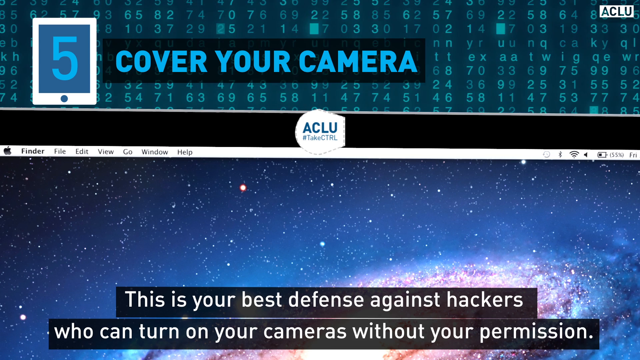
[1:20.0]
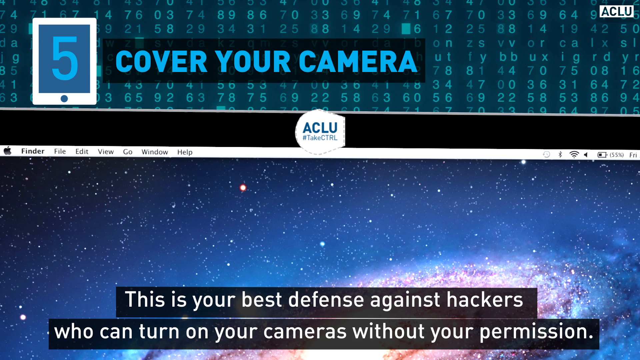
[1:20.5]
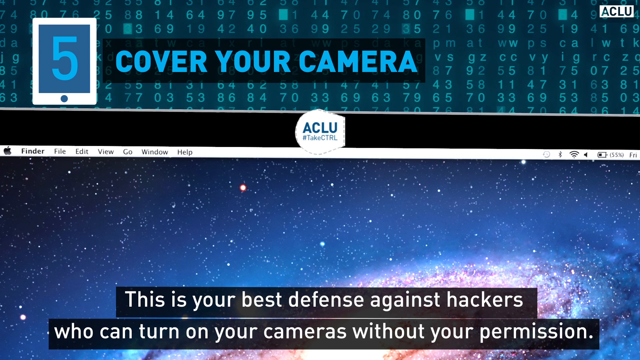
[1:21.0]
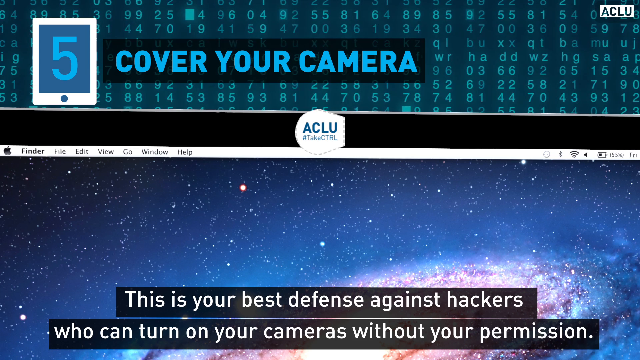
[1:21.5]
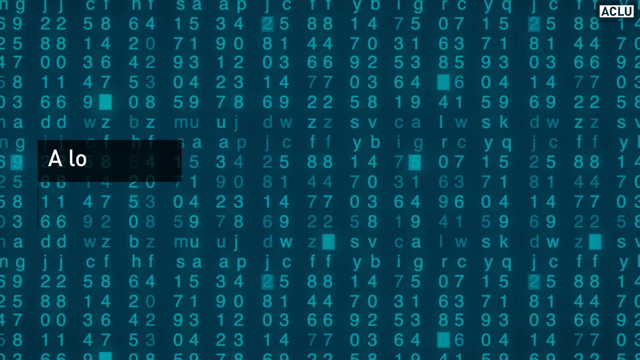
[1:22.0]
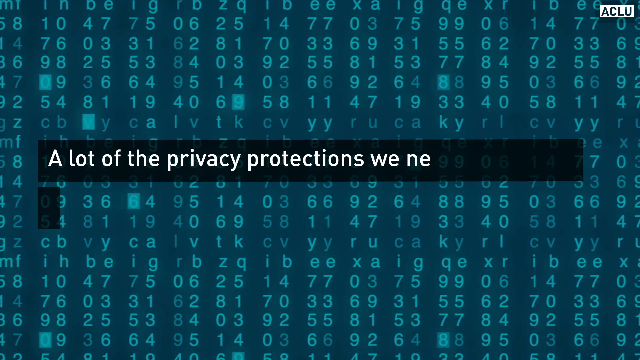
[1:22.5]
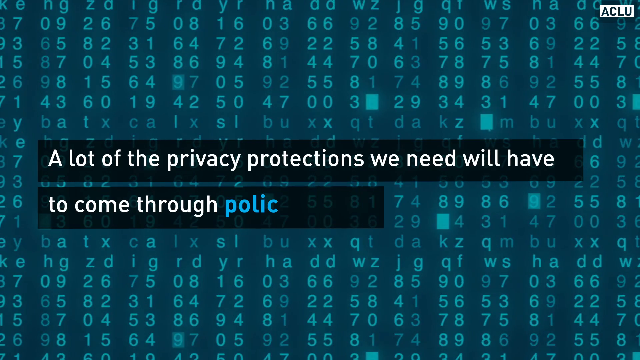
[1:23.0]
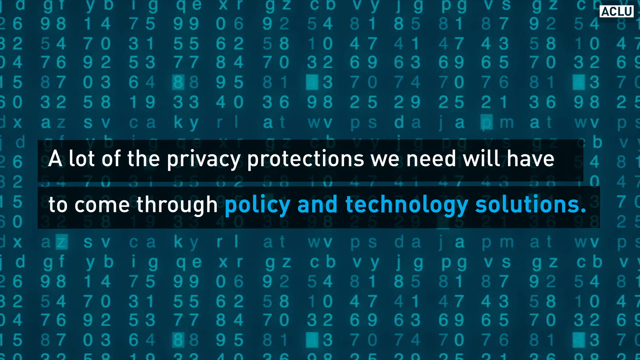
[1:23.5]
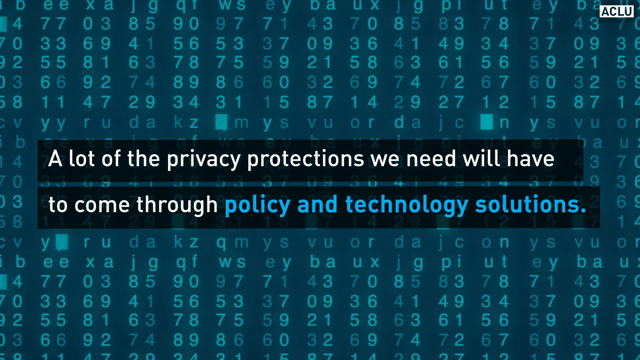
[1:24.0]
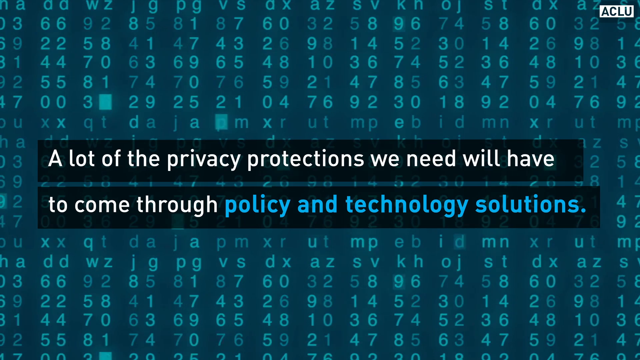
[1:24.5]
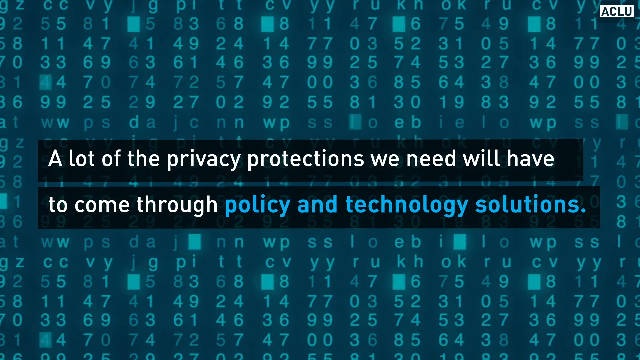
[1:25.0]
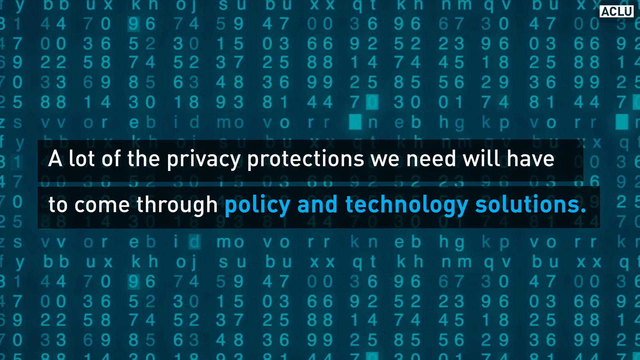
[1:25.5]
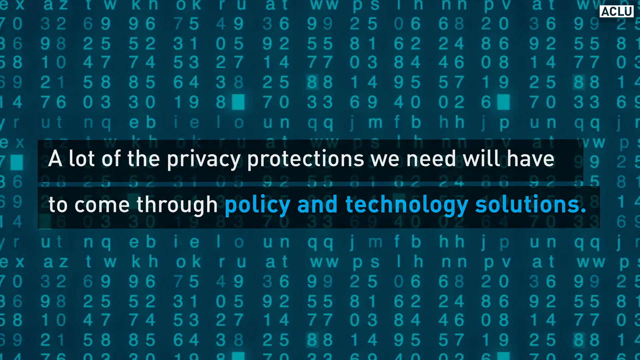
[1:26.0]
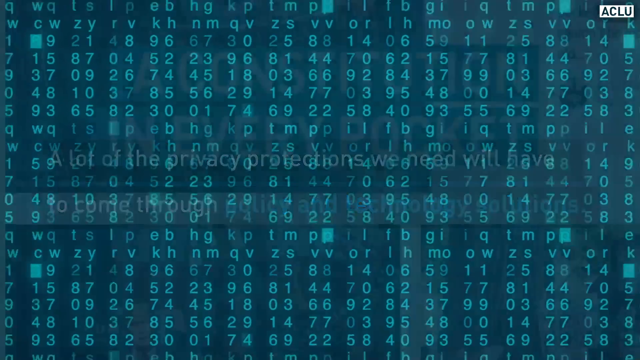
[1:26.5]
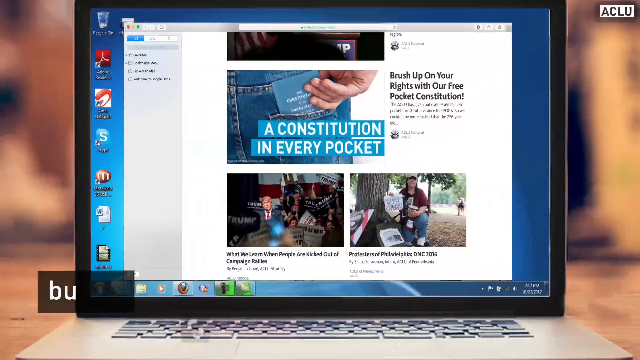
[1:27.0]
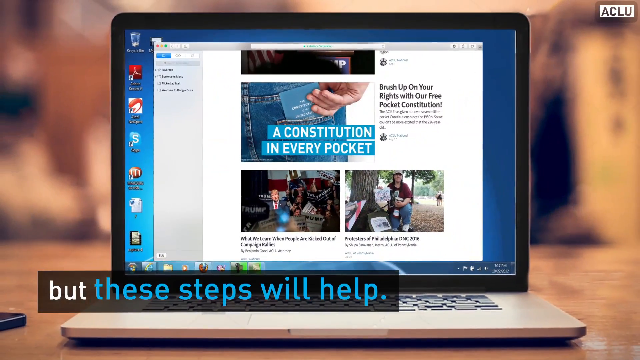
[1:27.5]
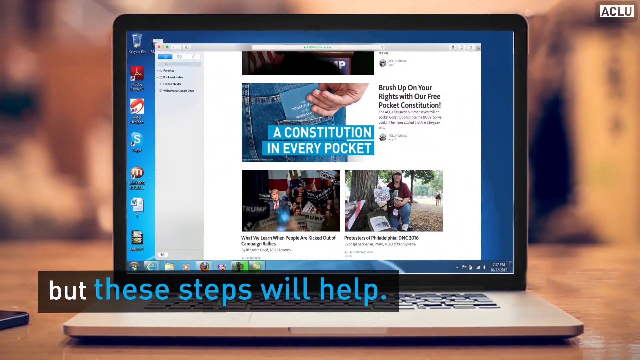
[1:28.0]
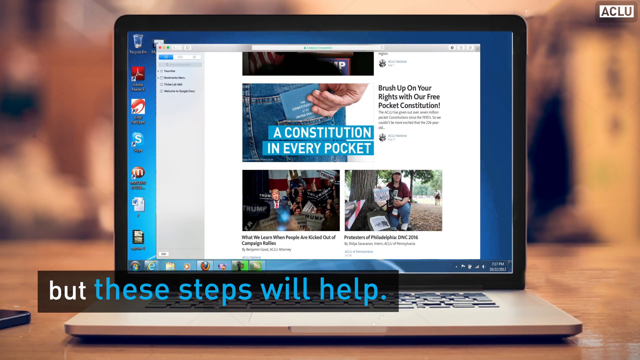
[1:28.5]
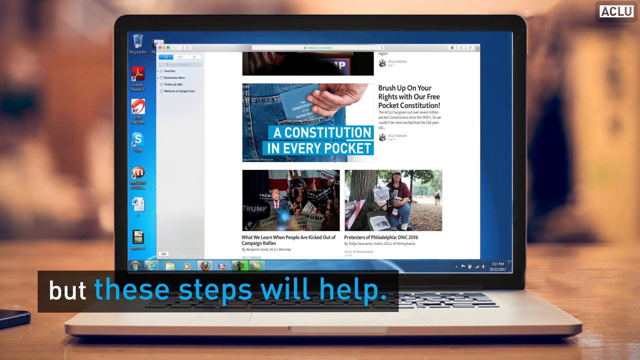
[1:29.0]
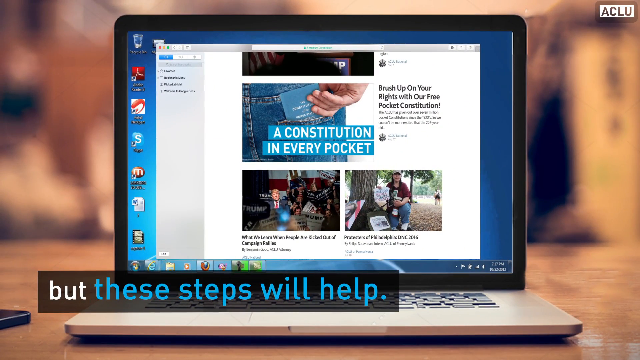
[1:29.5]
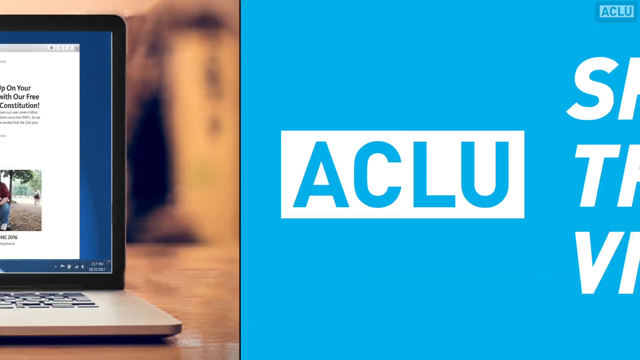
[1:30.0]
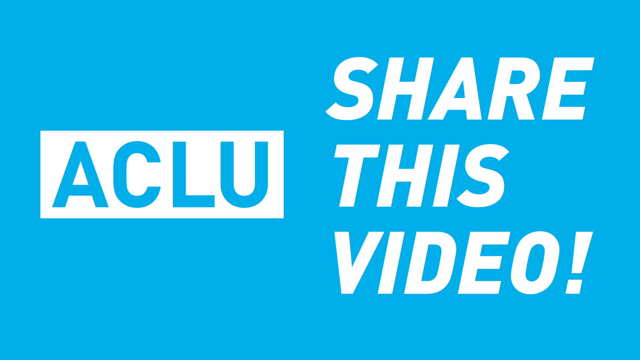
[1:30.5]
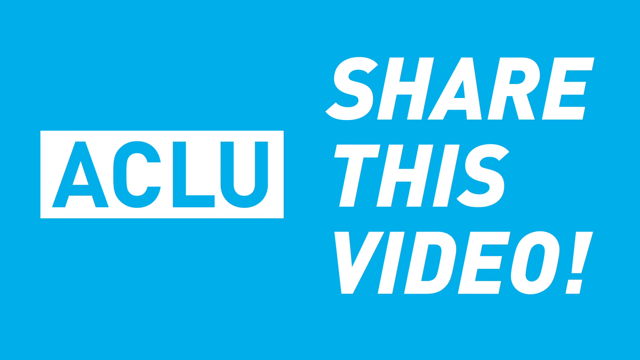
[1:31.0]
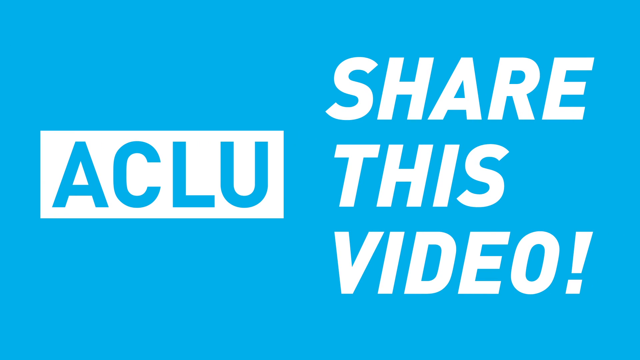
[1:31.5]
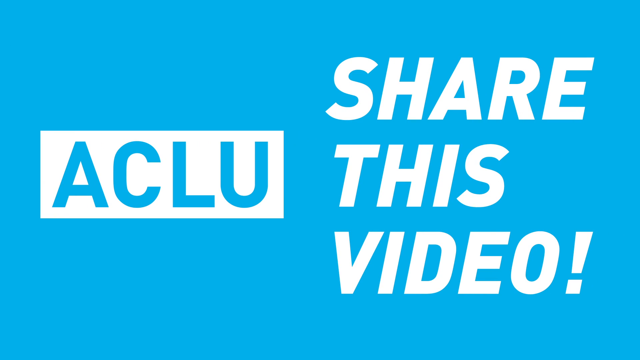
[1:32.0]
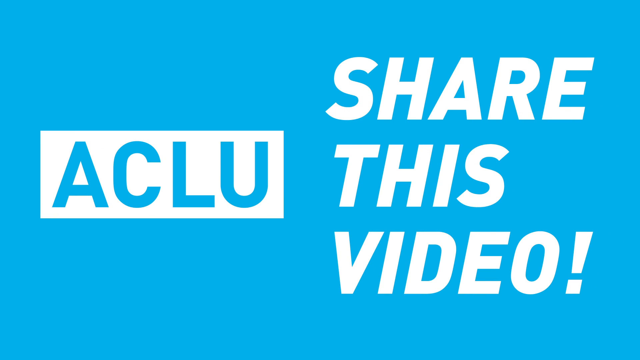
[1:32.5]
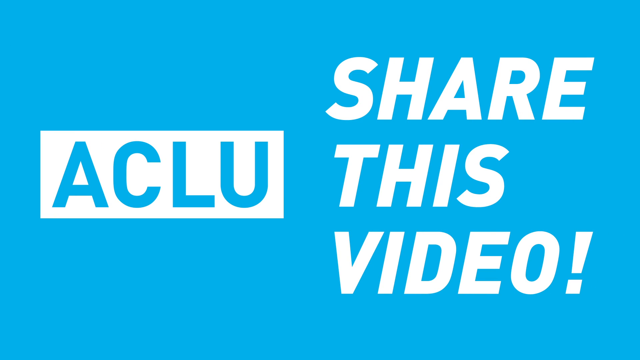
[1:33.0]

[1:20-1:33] The last piece of advice, "cover your camera," stays on screen for about two seconds. A scene change follows, with text reading "a lot of privacy protections we need will have to come through policy and technology solutions." The camera zooms out to show a laptop with a browser on it, and one of the titles is "constitution in every pocket." Text then reads "but these steps will help." The ending credits show the ACLU logo and "share this video" in large uppercase white letters.